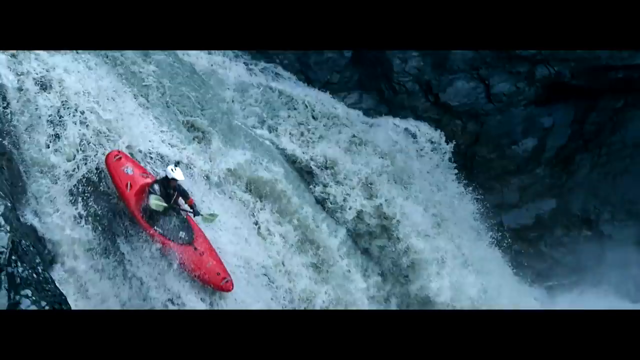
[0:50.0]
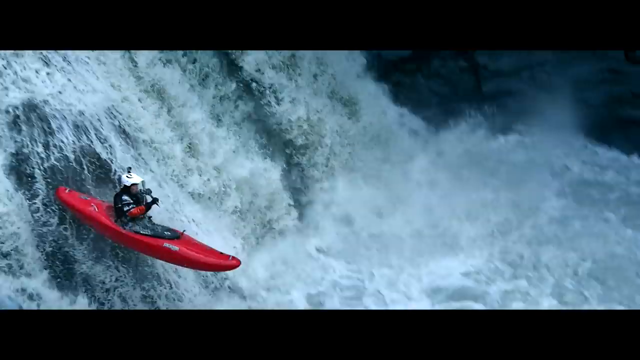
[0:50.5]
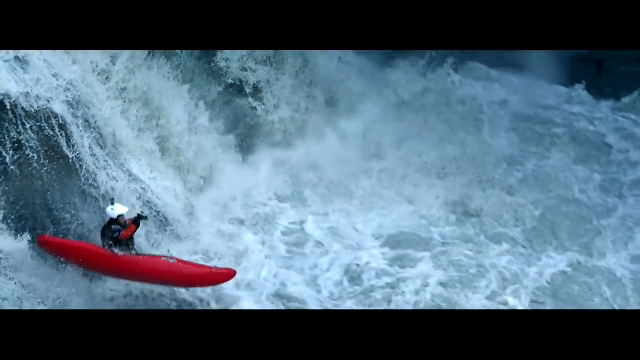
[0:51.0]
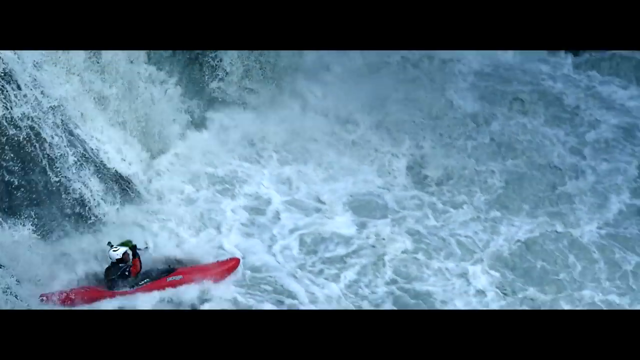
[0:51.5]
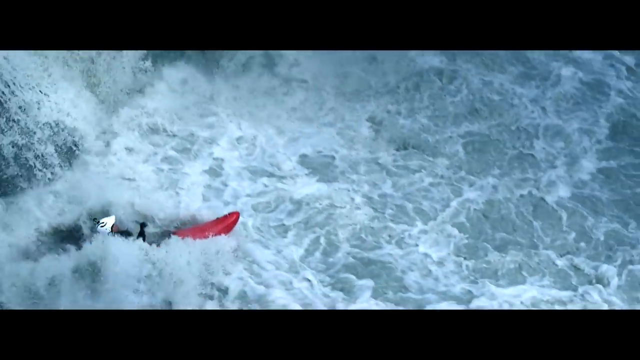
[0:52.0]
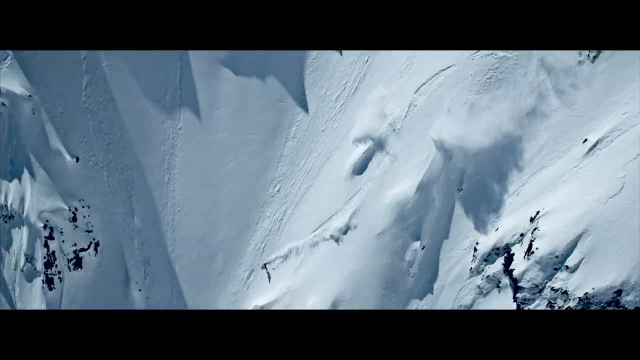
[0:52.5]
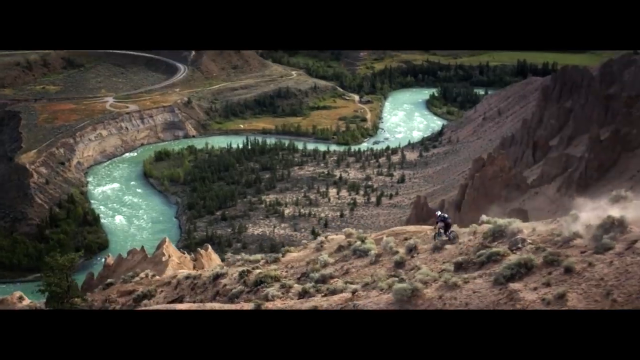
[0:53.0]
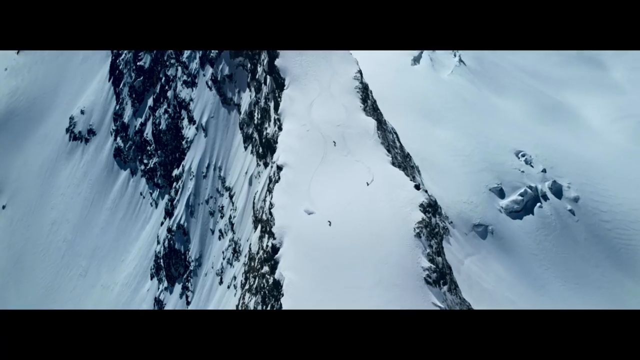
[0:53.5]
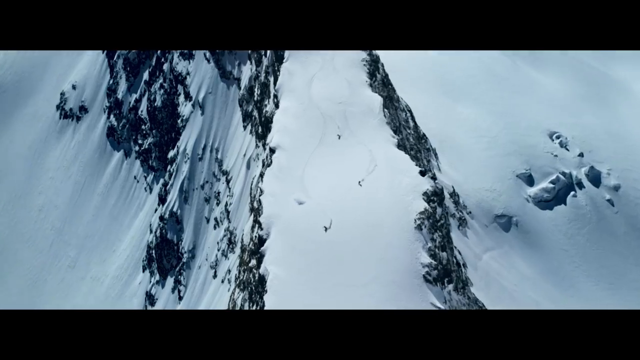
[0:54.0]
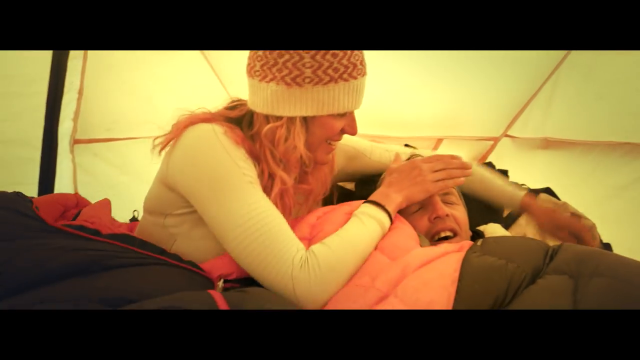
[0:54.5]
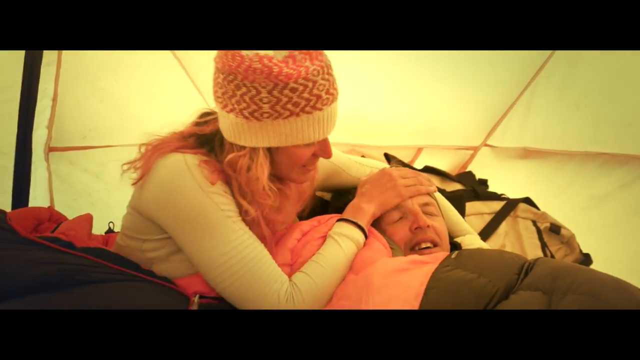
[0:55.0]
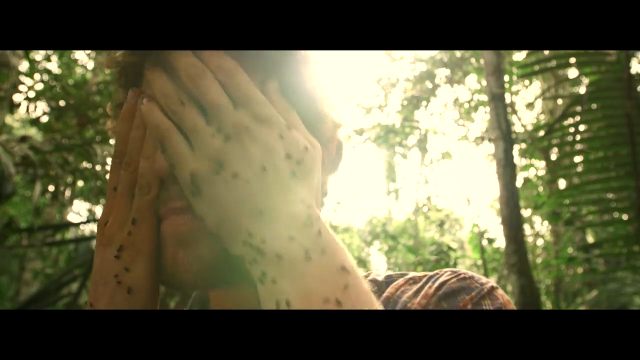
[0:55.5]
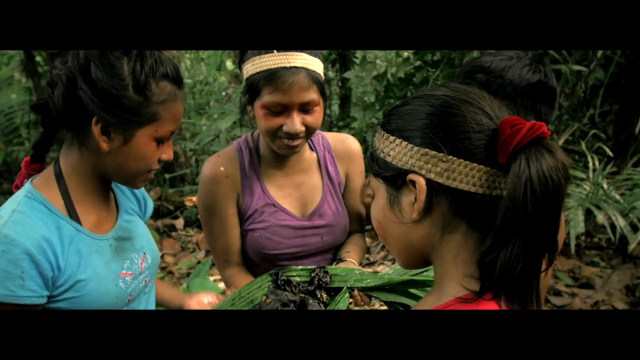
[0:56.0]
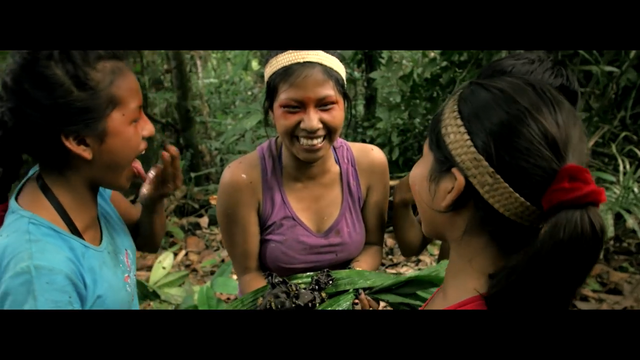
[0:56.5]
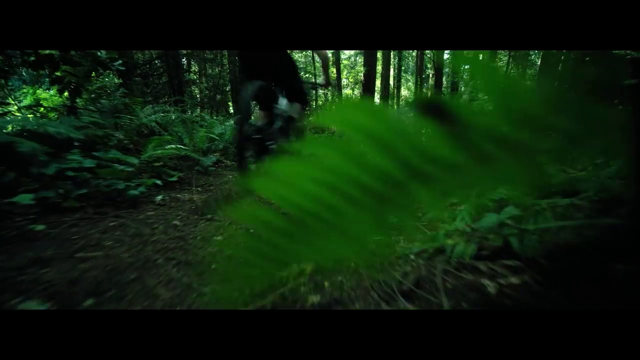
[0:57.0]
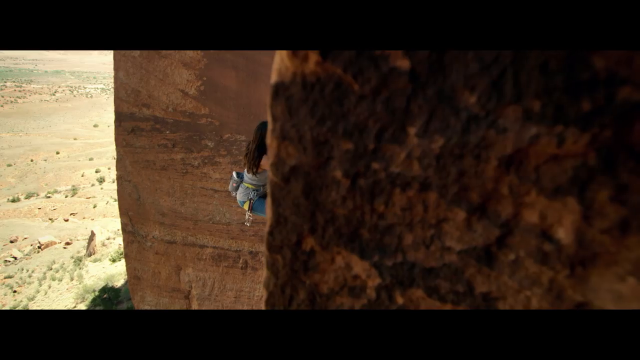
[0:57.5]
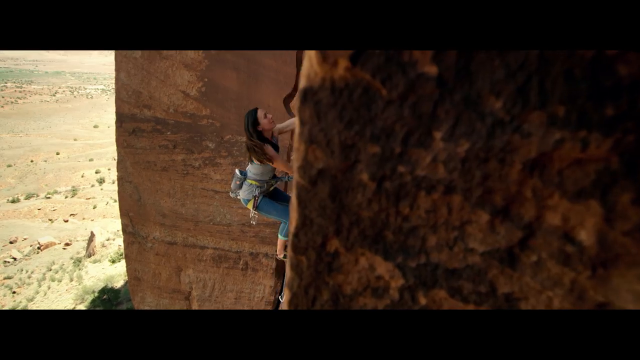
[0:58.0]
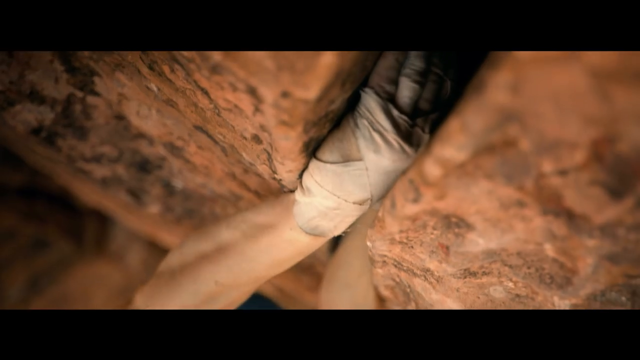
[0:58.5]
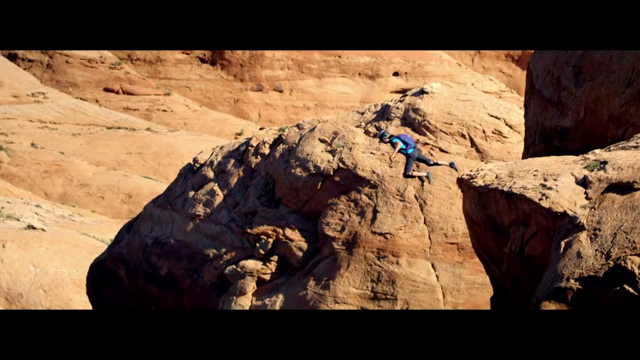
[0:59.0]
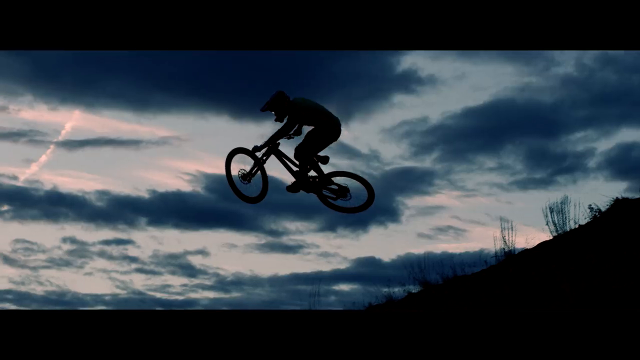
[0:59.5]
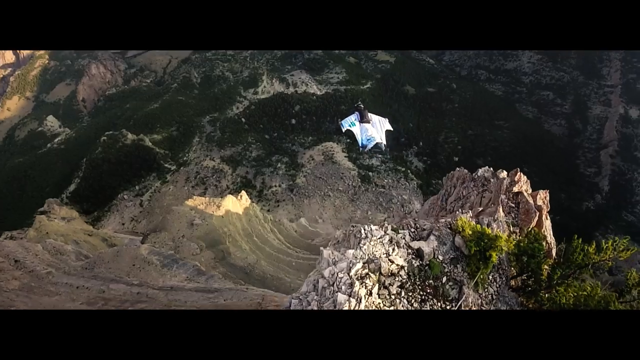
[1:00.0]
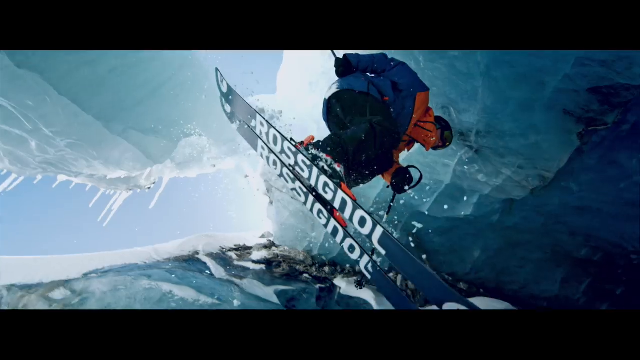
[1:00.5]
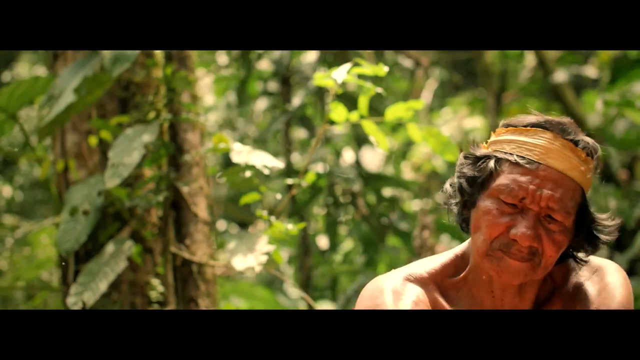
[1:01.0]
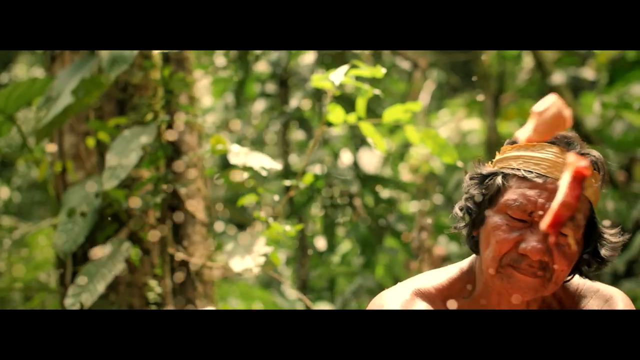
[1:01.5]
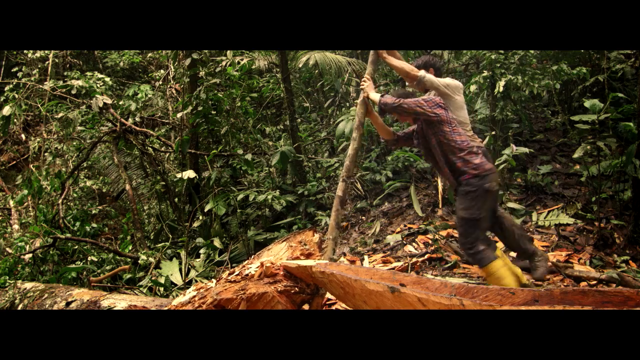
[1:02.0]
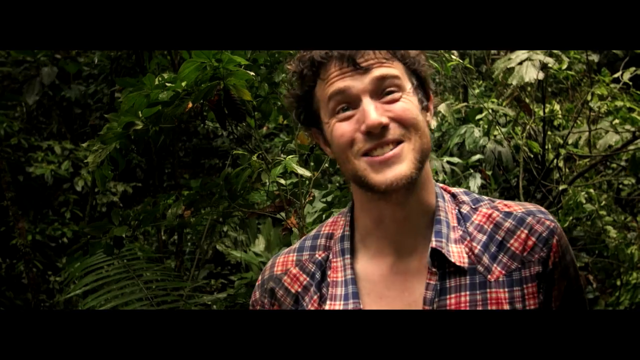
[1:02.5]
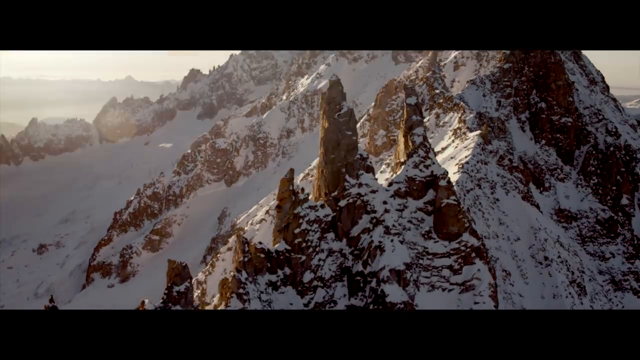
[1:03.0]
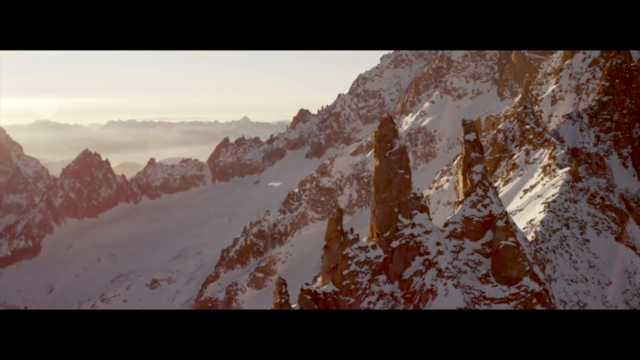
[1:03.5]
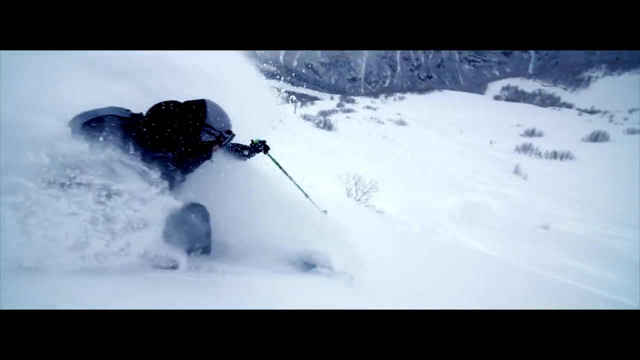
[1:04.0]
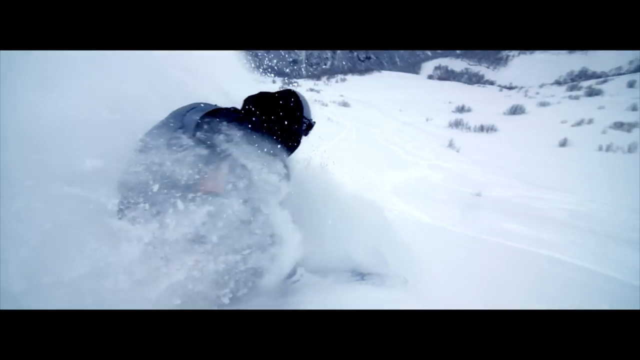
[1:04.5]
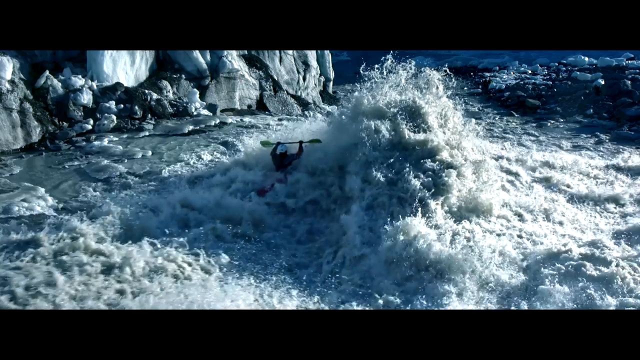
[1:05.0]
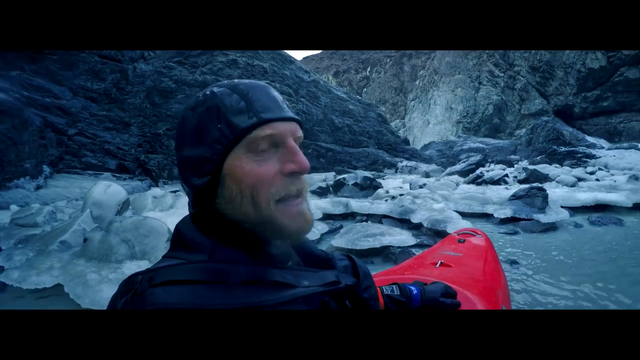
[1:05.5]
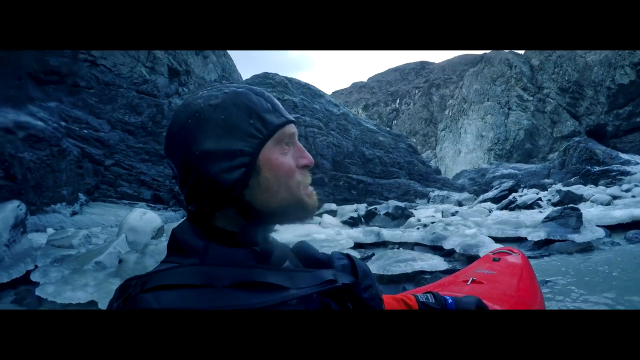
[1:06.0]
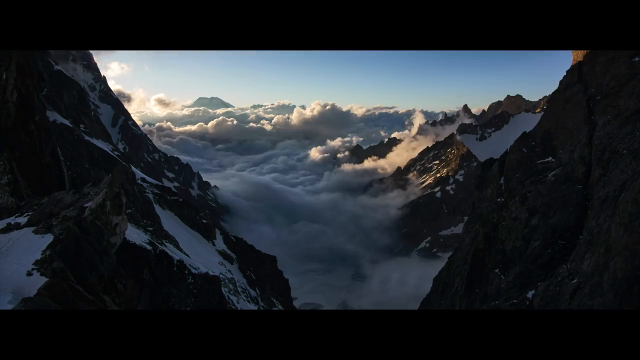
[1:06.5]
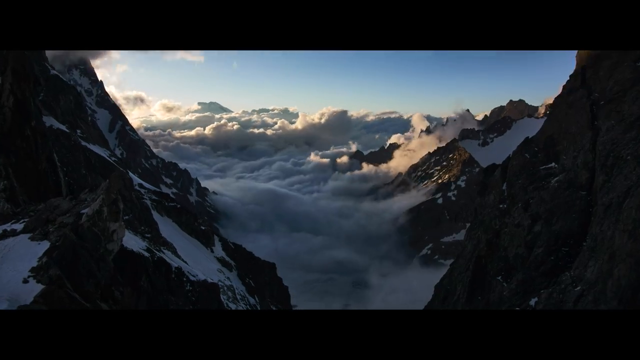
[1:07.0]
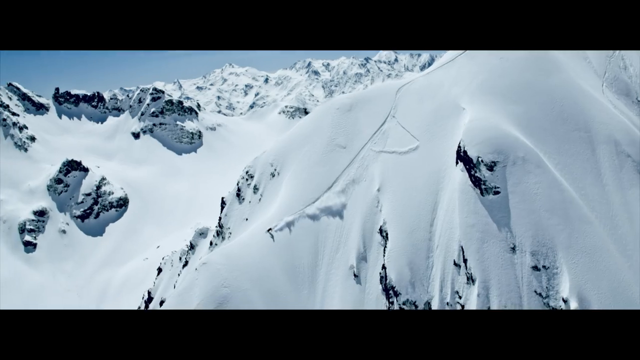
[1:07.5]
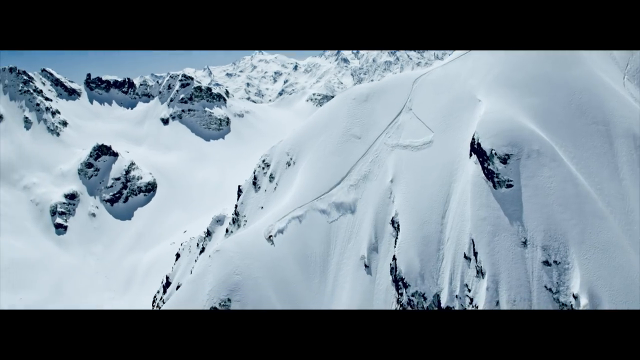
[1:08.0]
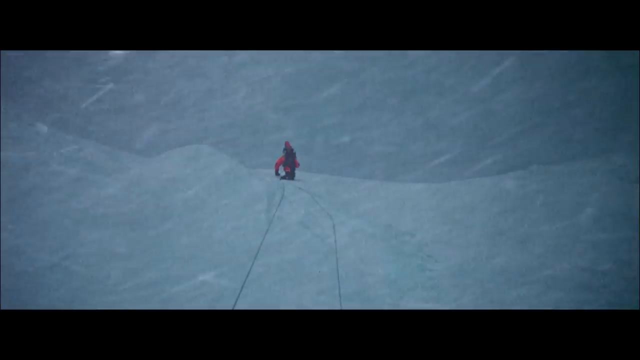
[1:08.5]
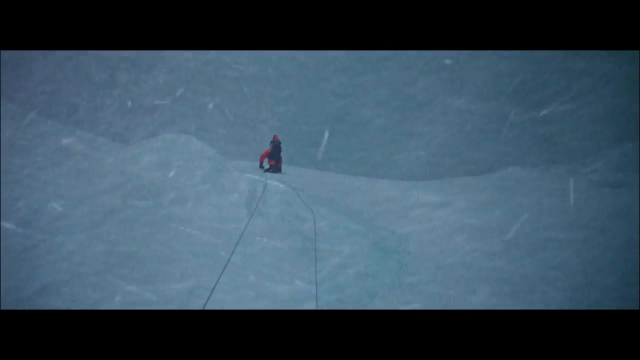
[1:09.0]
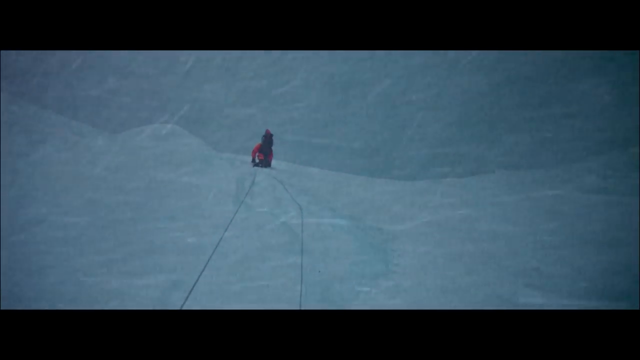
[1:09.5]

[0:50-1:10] An aerial shot shows someone skiing on a snowy mountain. A biker rides along a mountain edge in a very rocky landscape. A man and a woman hug each other inside a yellow tent. In a forest, a man covers his face with his hands, which are covered in bugs. Three girls in a forest, all dark-skinned and wearing dirty clothes, smile at each other while holding some leaves. A rider passes by very fast in a forest in a brief shot. A woman climbs a rocky mountain, followed by a close-up of her dirty hands on the rocks. A person jumps down a rocky edge. The black silhouette of a biker jumps in the air against a bright blue sky. Someone flies over a rocky landscape. A man wearing a yellow bandana cuts wood in a forest. A close-up shows a smiling man, followed by a snowy mountainside and someone skiing on the snow in slow motion. On a river with a very fast current, someone in a kayak tries to fight it. A headshot shows a man in a black suit, completely wet, talking to the camera, with the river and his kayak behind him. A shot between high mountains shows clouds moving fast between them. More aerial shots show someone skiing, the person appearing very tiny.